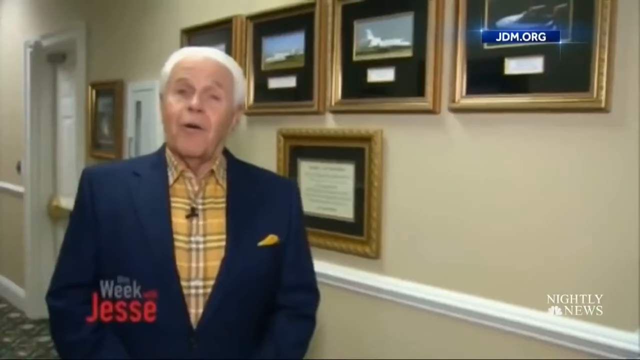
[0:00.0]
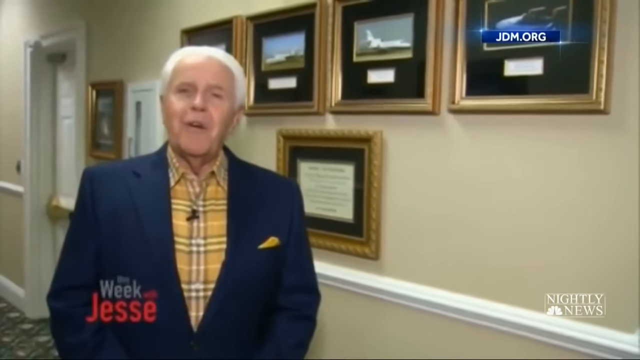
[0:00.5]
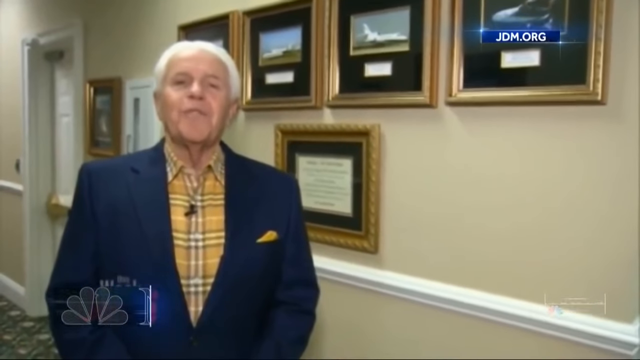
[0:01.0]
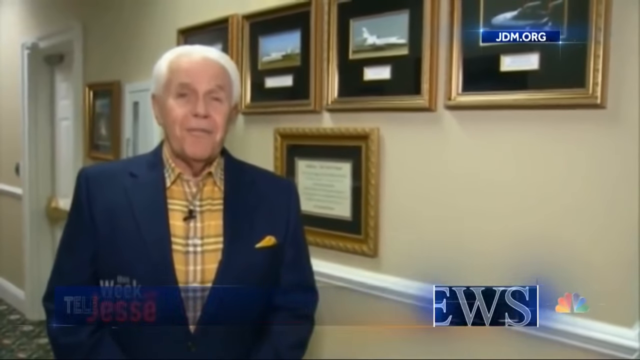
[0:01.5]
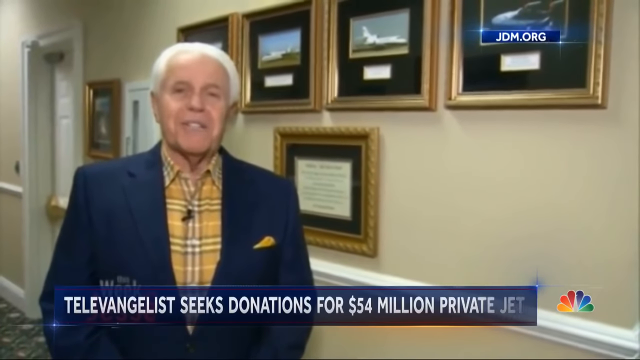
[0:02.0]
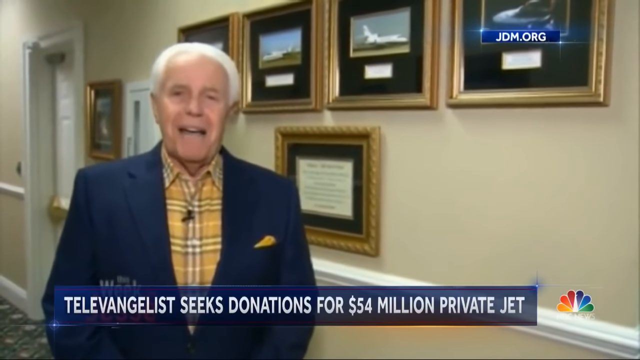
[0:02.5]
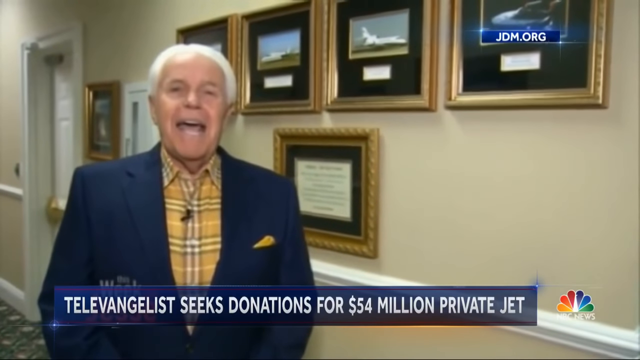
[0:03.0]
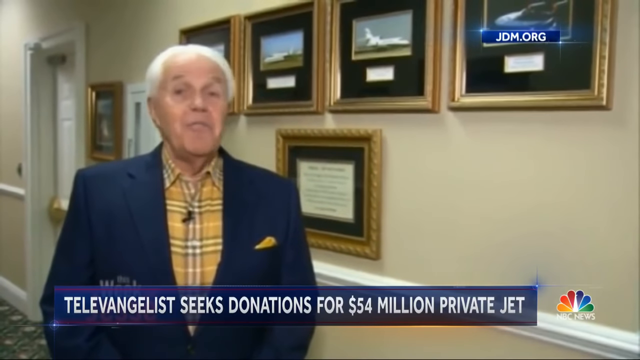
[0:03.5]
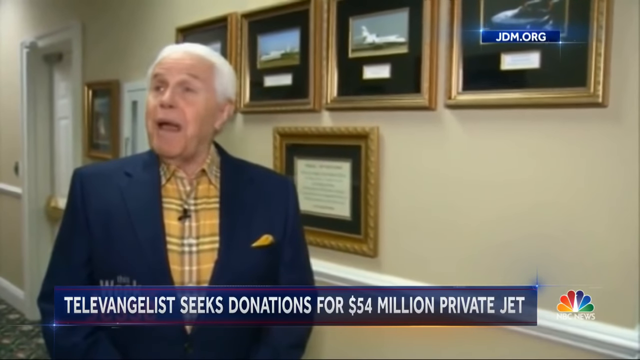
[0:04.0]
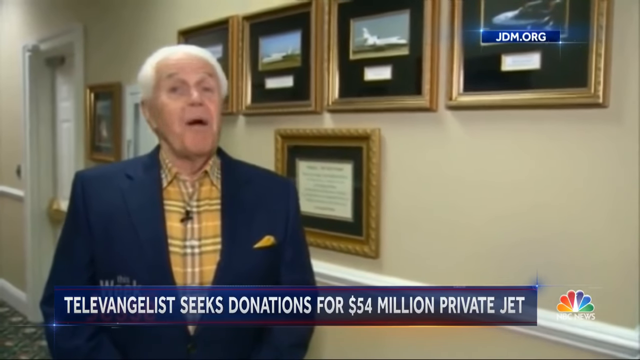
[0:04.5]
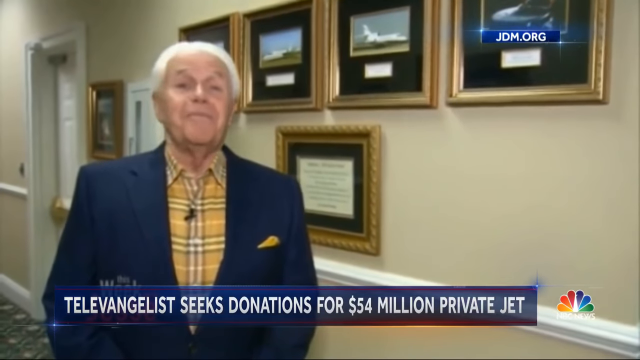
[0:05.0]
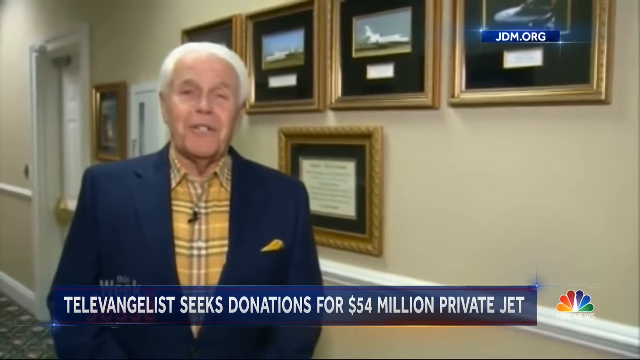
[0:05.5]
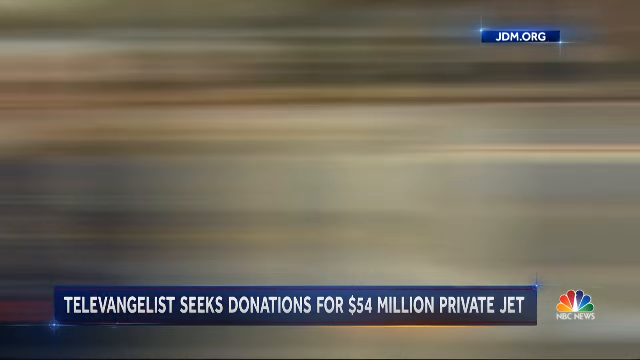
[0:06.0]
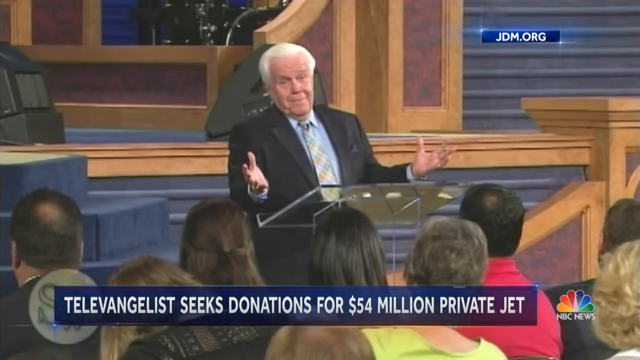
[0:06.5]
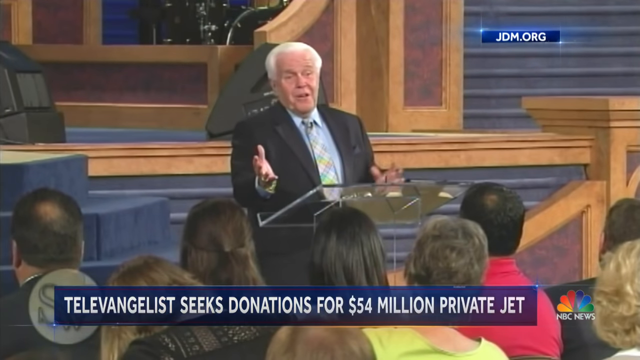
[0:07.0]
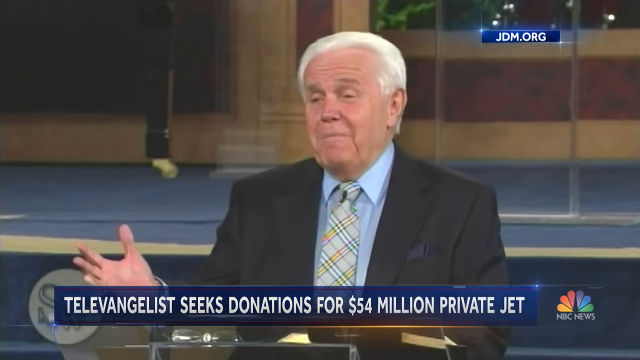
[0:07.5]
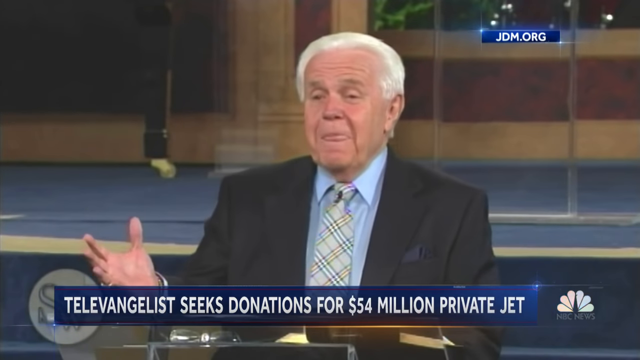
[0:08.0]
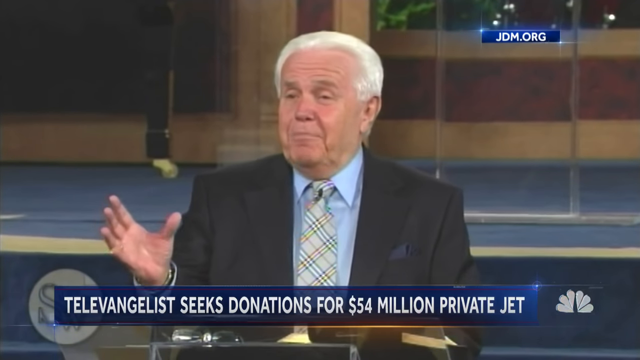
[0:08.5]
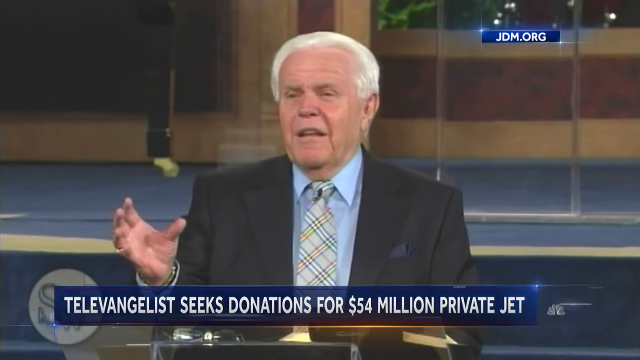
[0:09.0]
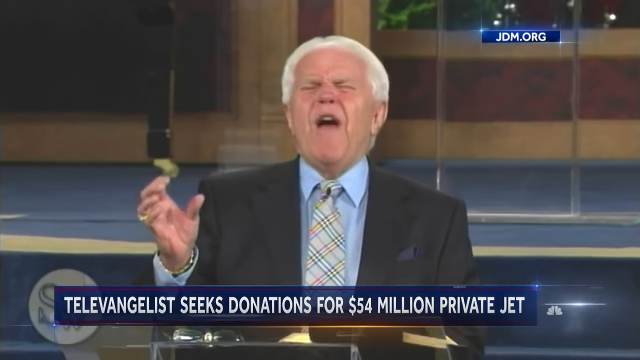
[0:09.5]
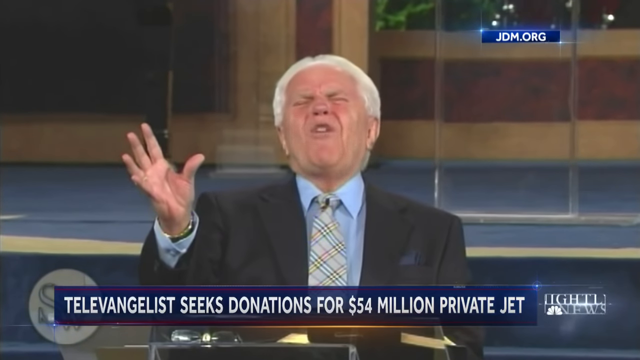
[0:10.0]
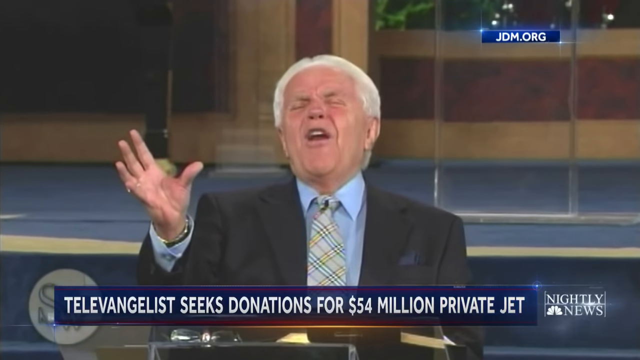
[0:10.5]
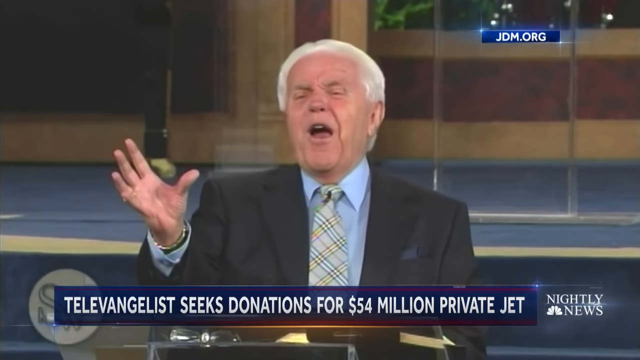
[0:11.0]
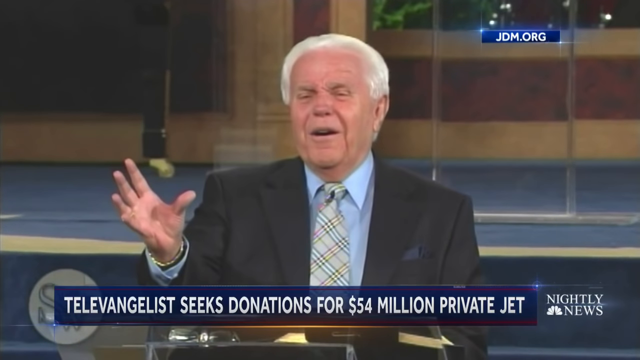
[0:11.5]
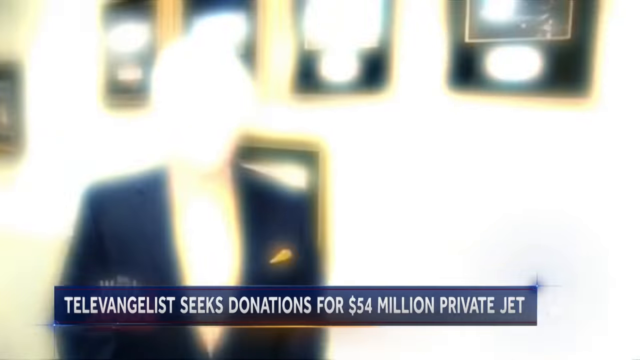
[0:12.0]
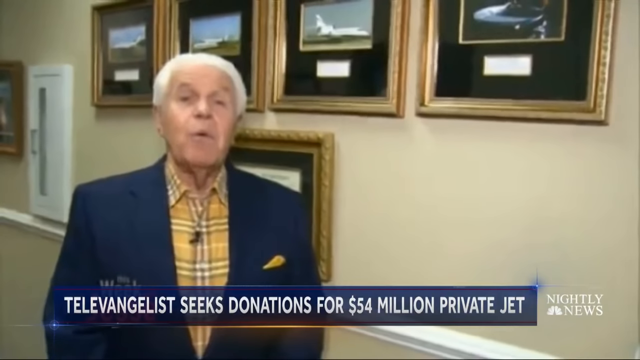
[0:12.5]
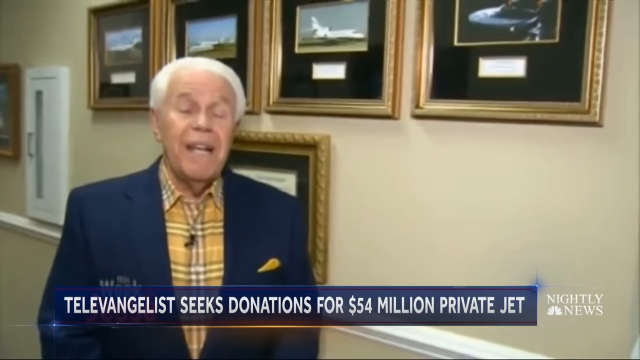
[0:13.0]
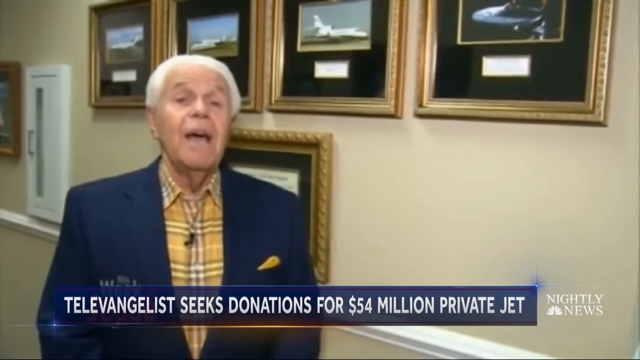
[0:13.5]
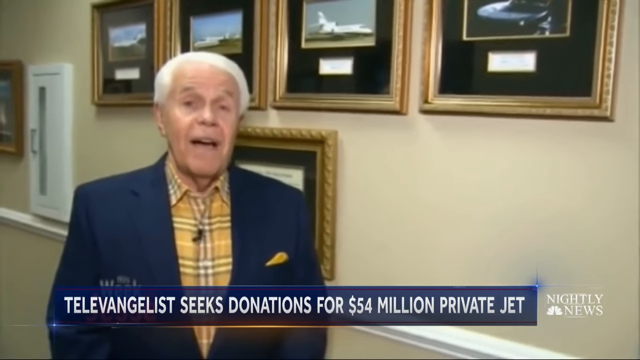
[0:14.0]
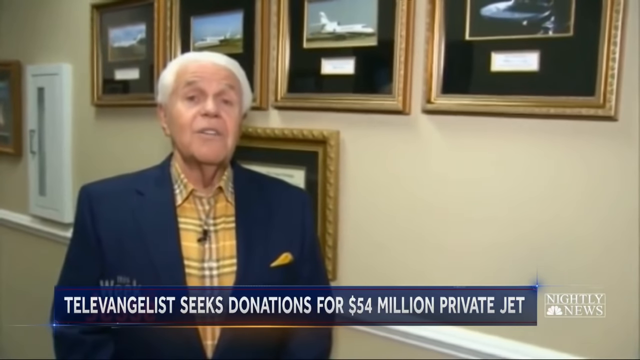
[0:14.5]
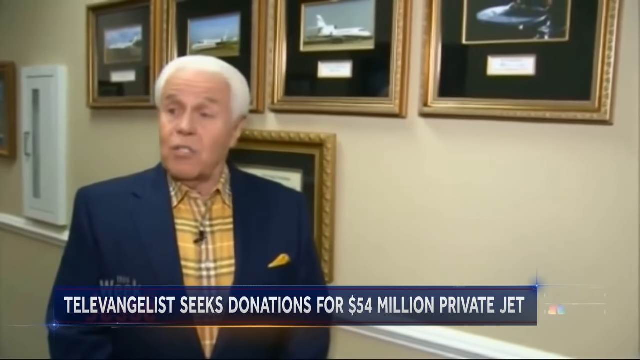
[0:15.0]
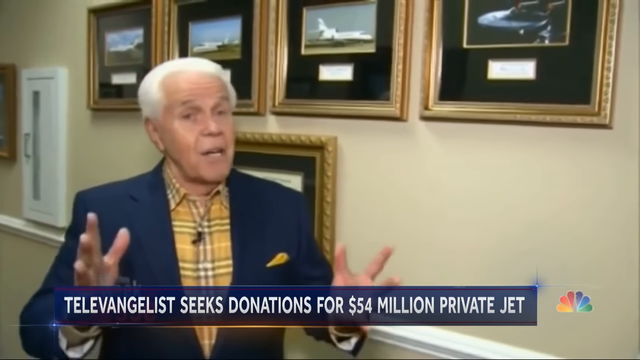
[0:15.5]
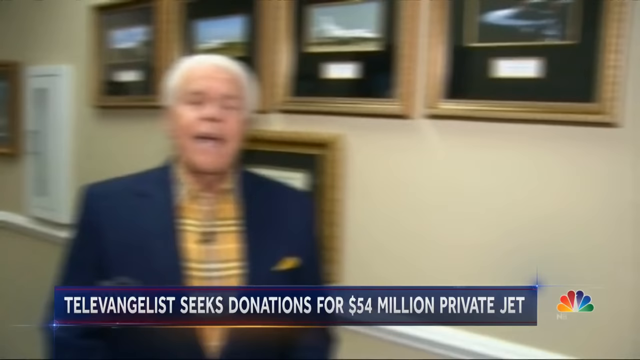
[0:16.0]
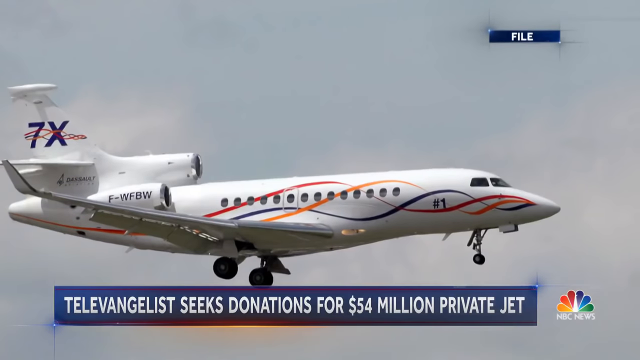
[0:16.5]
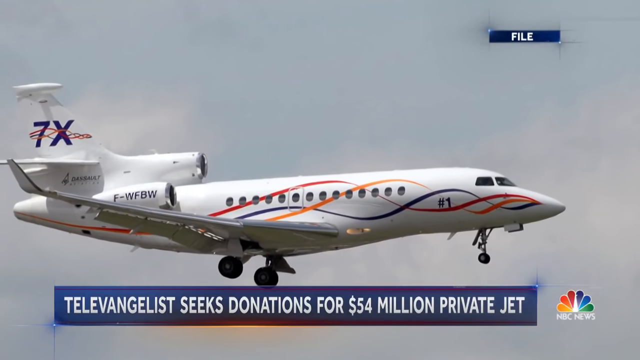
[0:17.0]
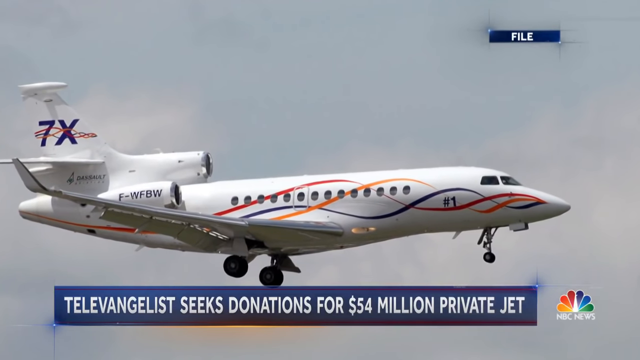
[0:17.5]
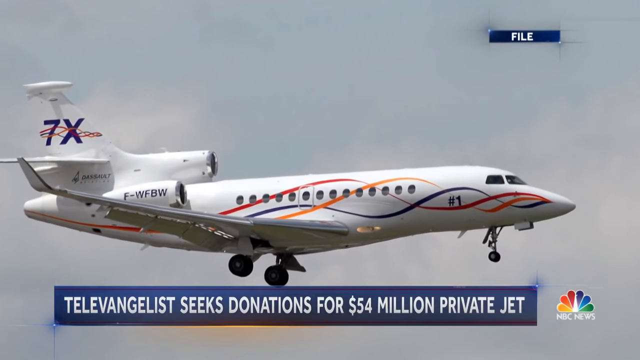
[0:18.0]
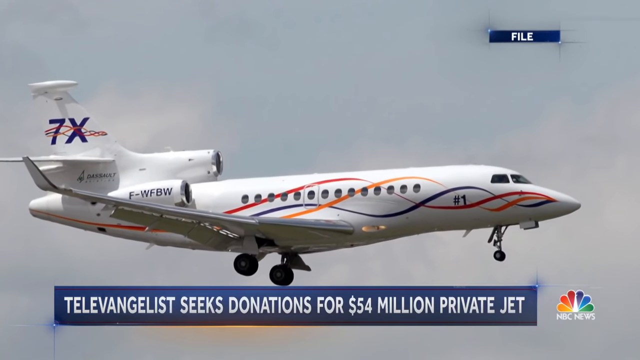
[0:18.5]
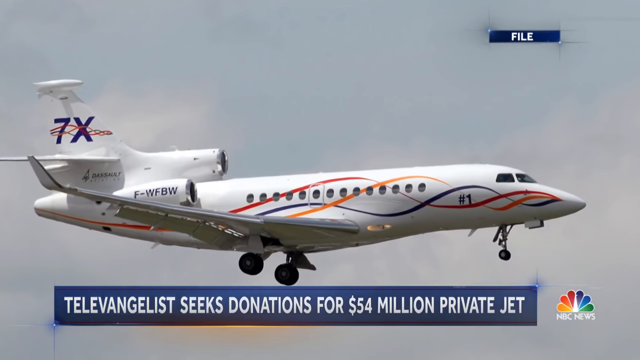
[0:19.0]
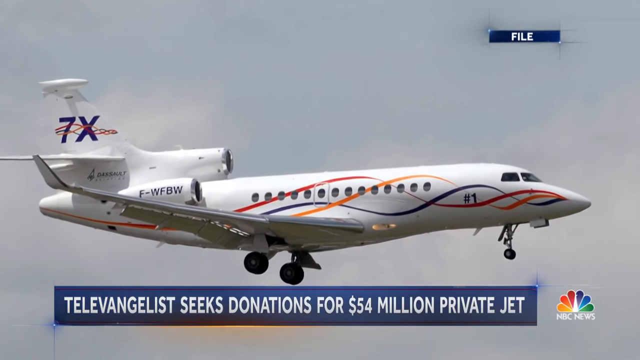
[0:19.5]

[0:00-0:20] This NBC News video shows the text "televangelist asks his followers for money" as a man stands in a hallway with a number of pictures and a certificate on the wall. The scene changes to the man standing behind a clear plastic pulpit. A jet is then shown flying, with the text "televangelist seeks donations for $54 million private jet." Footage from JDM.org follows, and the man talks to the news crew. A picture shows a white jet with blue, orange and yellow ribbons on it. The byline "televangelist seeks donations for $54 million private jet" keeps running at the bottom. He is an older man with white hair, wearing a yellow plaid shirt and a blue suit. The video keeps rotating between him standing in the hall in front of the pictures and him standing behind the clear pulpit, where he wears a plaid tie and a blue shirt.